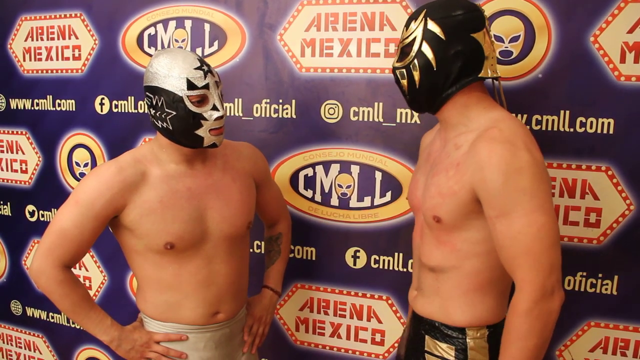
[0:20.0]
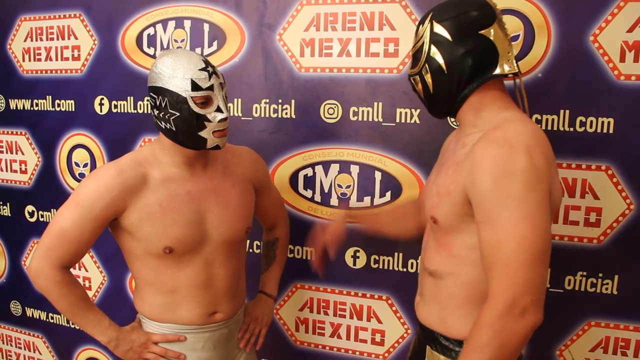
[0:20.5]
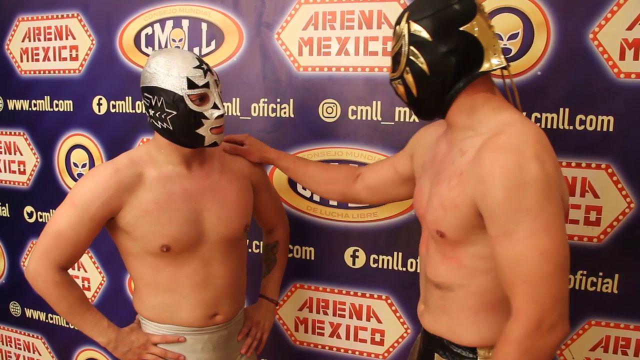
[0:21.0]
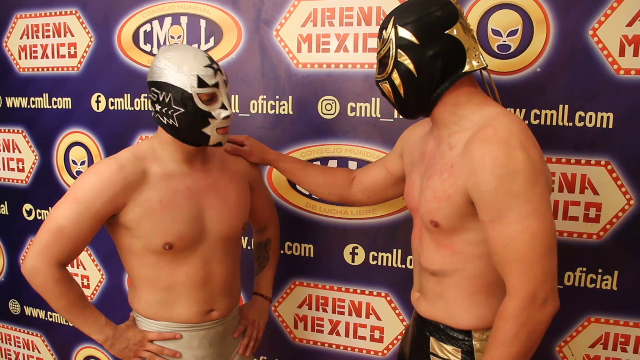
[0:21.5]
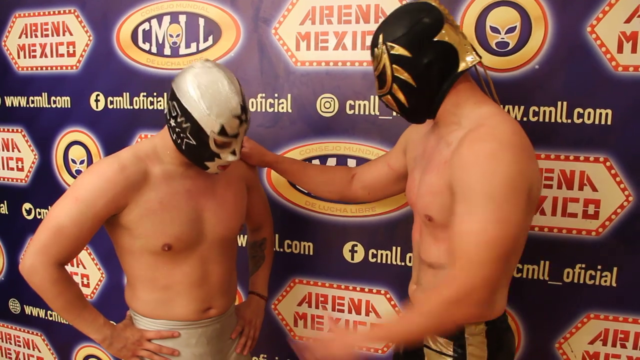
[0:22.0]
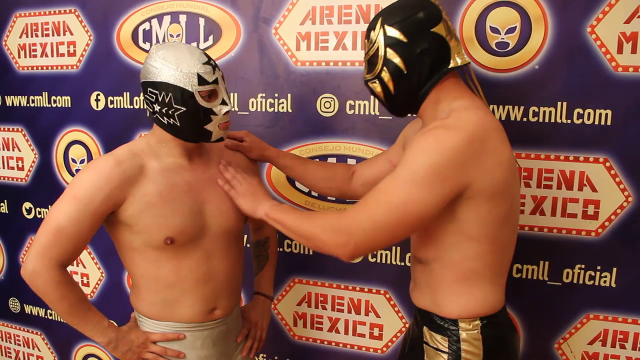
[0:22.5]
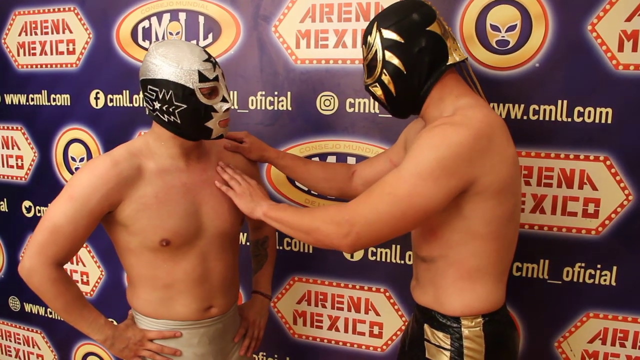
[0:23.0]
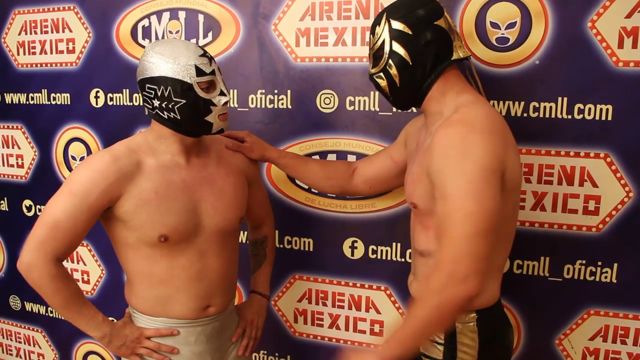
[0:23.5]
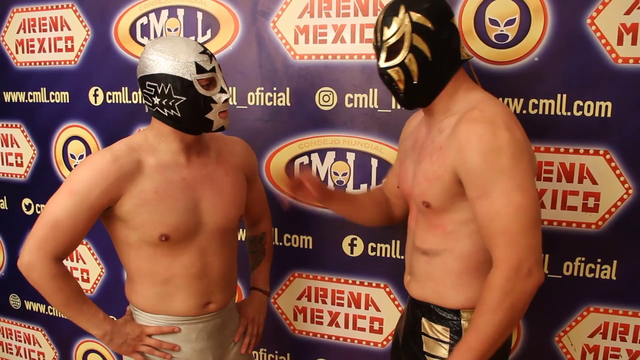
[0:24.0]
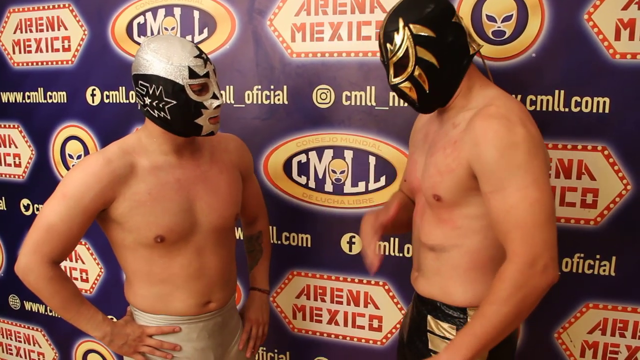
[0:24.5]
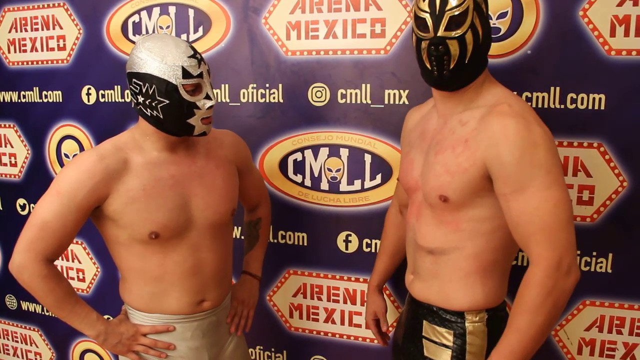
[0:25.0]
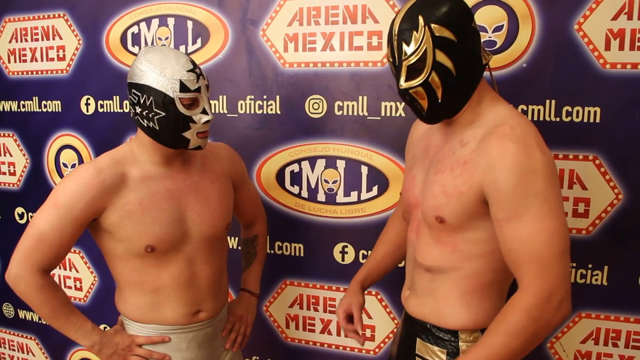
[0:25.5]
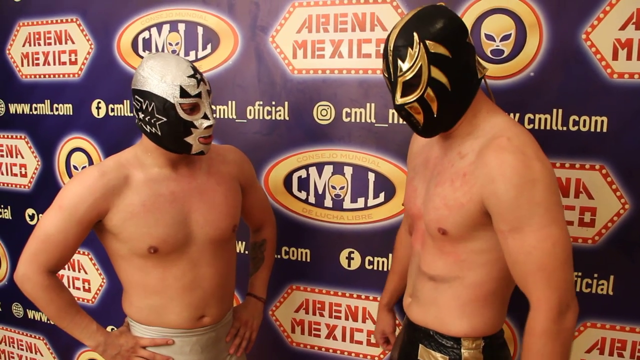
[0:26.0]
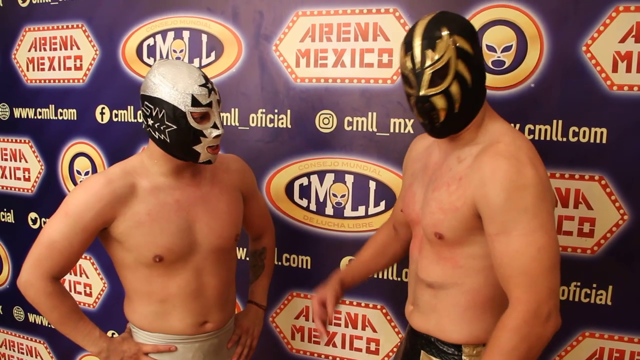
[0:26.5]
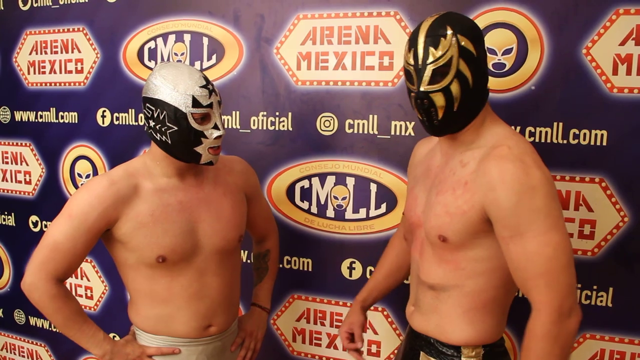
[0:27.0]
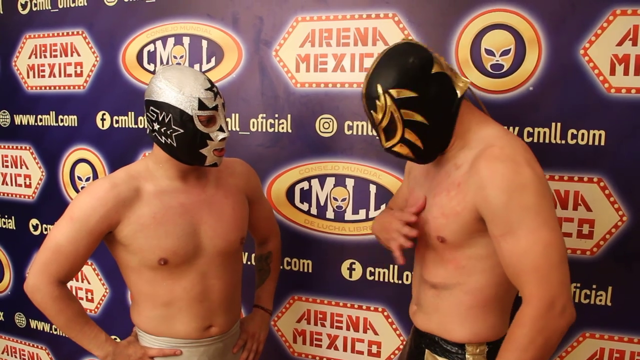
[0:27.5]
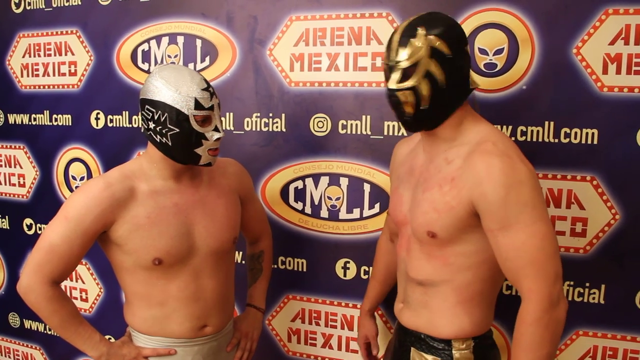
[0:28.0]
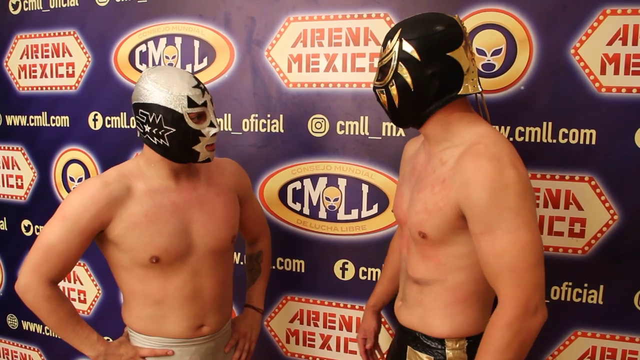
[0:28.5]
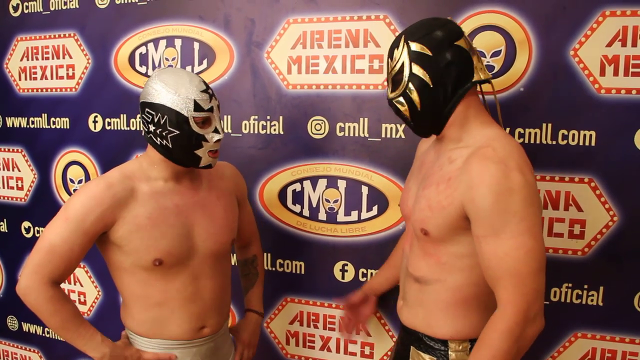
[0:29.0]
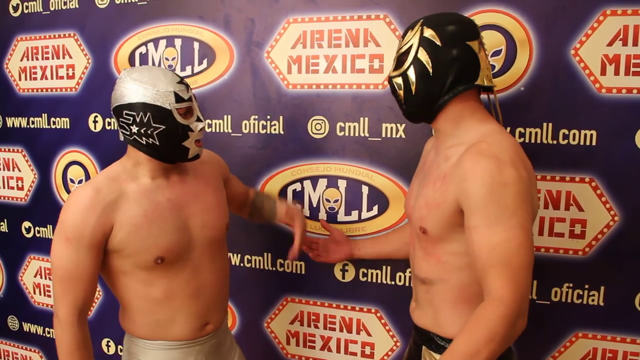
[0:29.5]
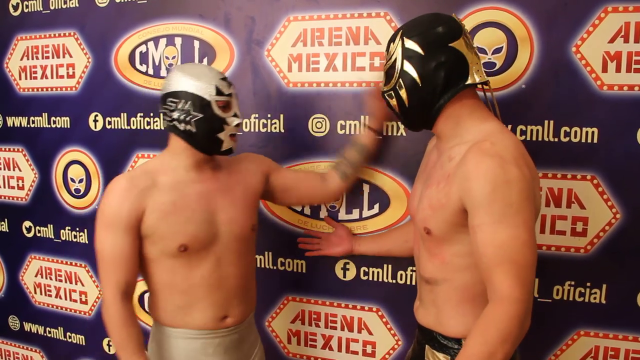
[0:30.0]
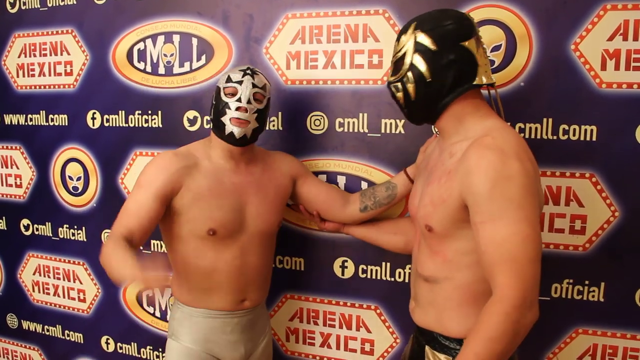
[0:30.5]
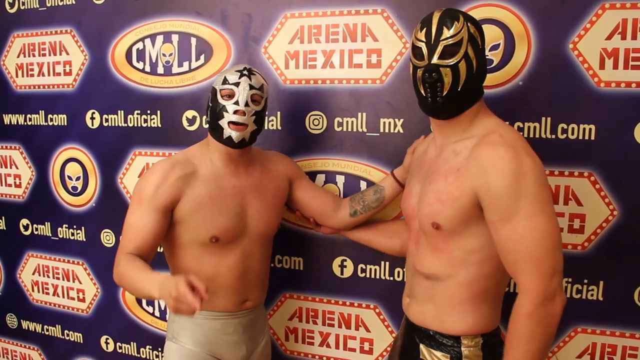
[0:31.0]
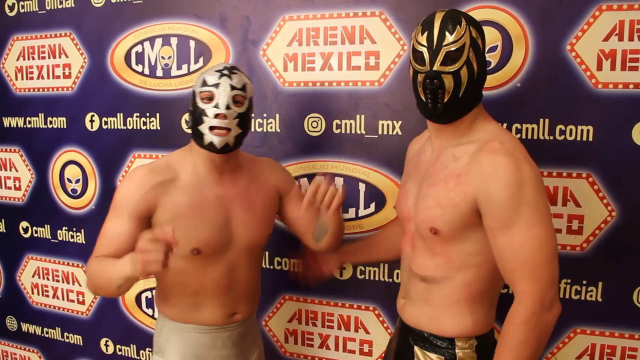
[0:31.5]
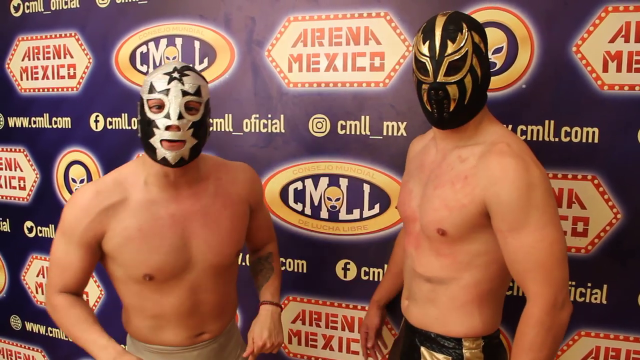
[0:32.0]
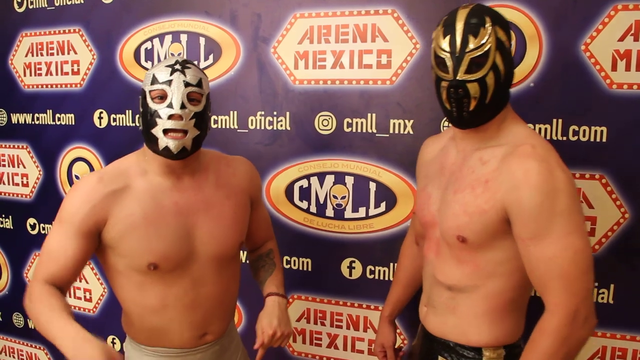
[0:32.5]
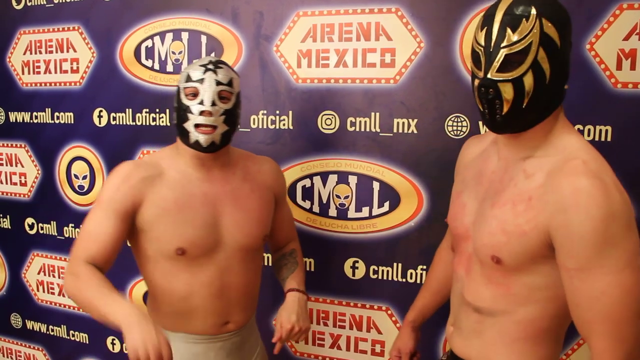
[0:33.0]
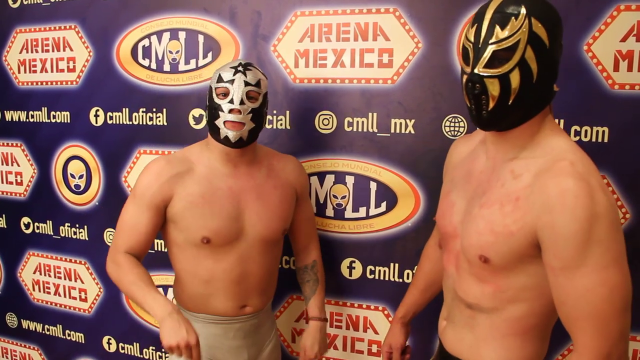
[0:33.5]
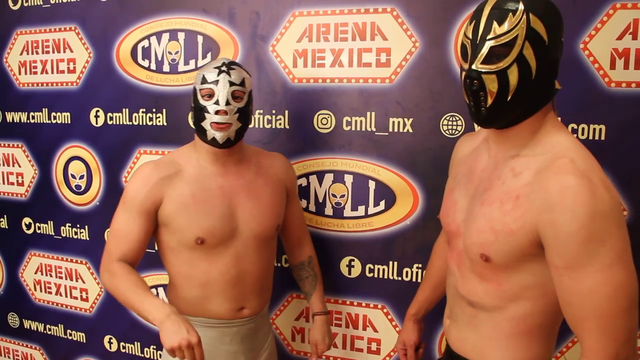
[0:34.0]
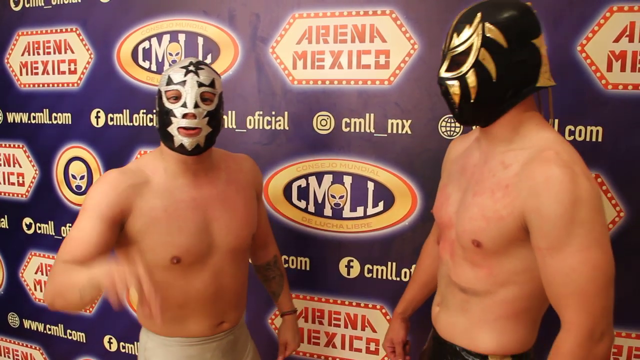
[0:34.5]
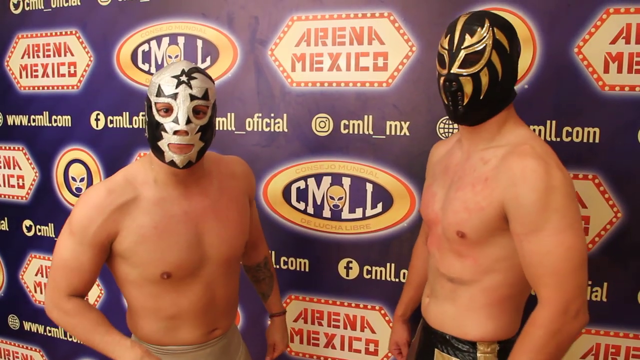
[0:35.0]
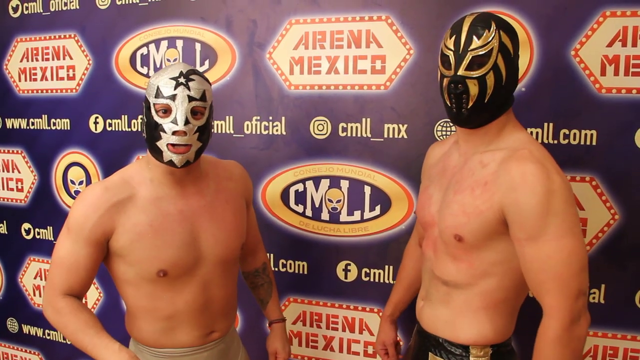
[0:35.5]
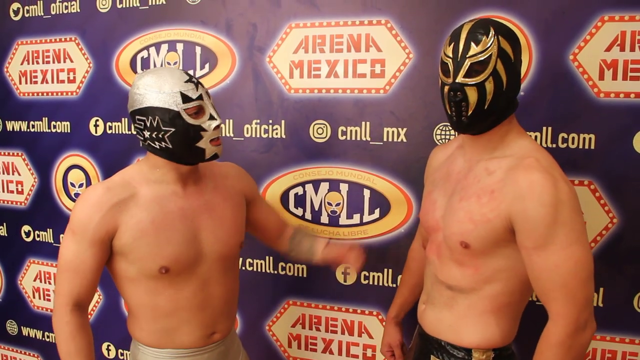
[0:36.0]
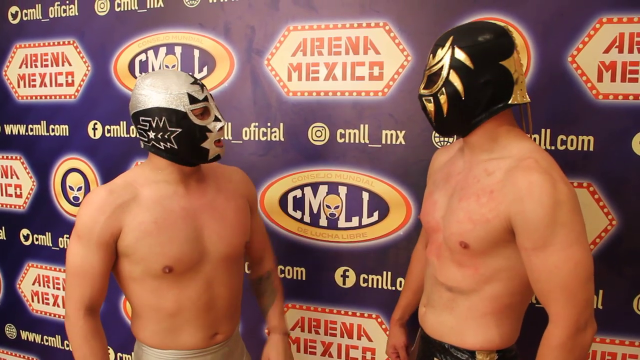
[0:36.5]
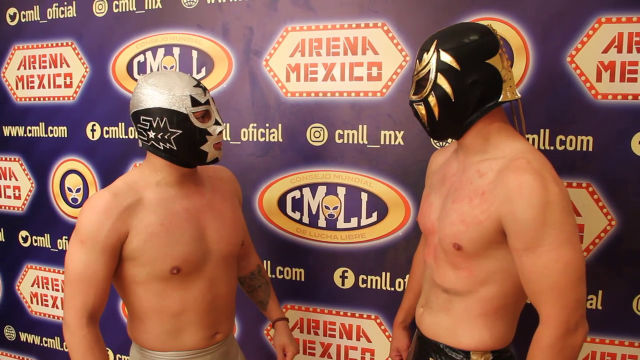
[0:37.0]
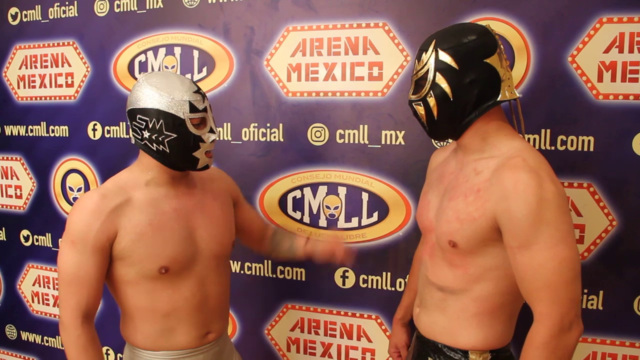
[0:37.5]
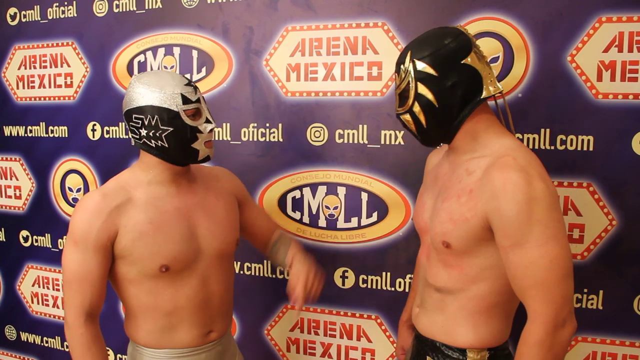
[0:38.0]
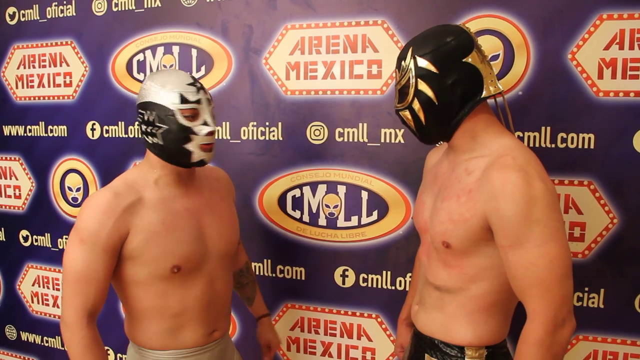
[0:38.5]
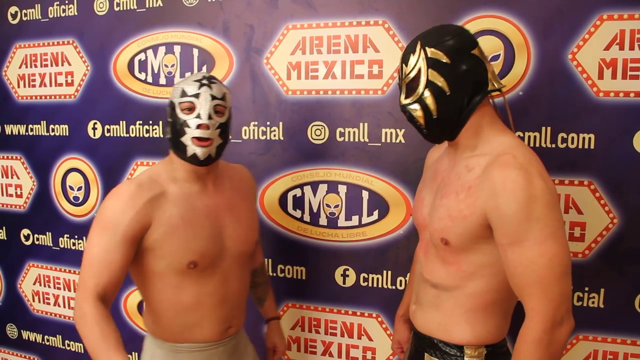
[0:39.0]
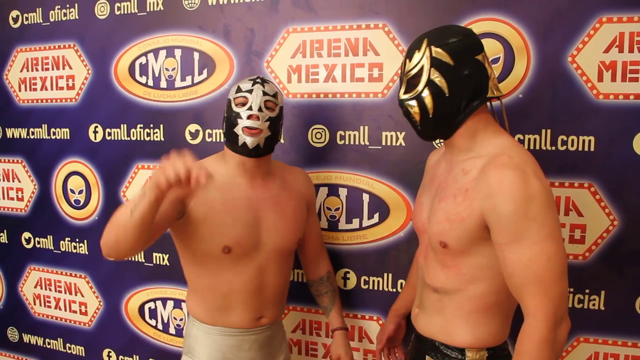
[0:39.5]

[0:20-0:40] The two men face each other and keep talking, looking each other in the eyes. Both touch each other on the arm as the conversation continues, and they use hand gestures. The man in the white and black mask keeps his hands on his hips while talking with the man in the black and gold mask. Their faces and hair are concealed by the masks. The men appear to be in their 30s. One of them has an arm bent on his left side, and that left hand is black in colour. Both men are shirtless.